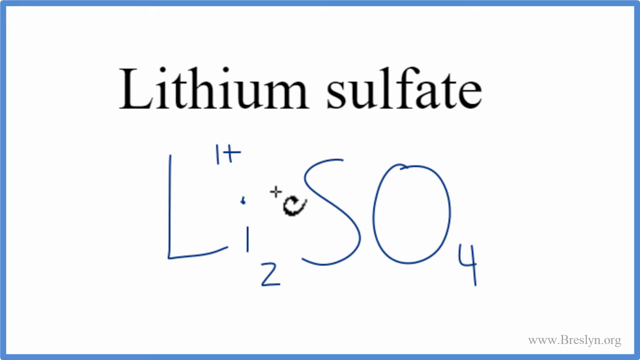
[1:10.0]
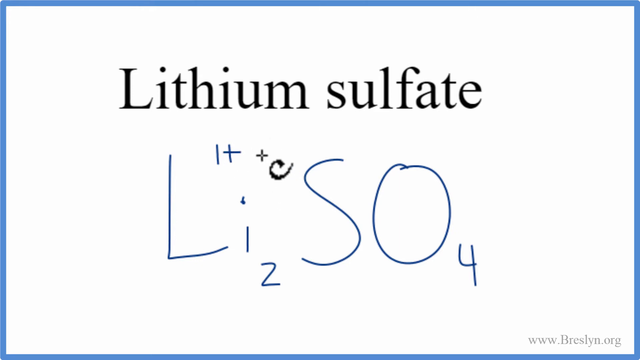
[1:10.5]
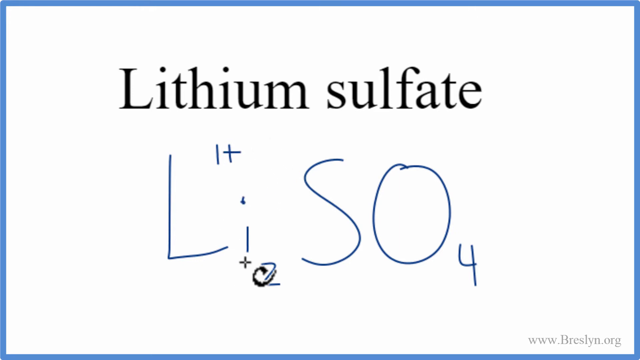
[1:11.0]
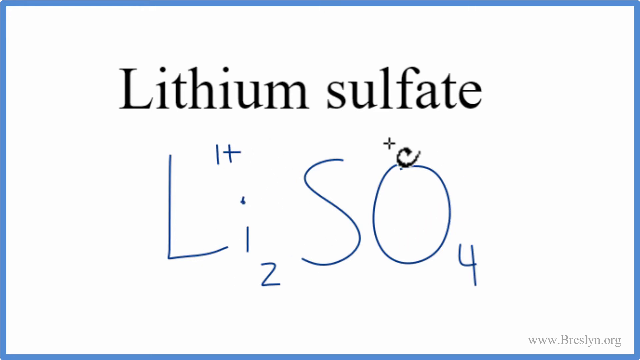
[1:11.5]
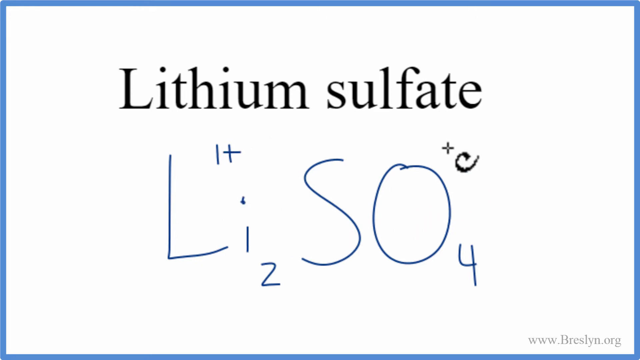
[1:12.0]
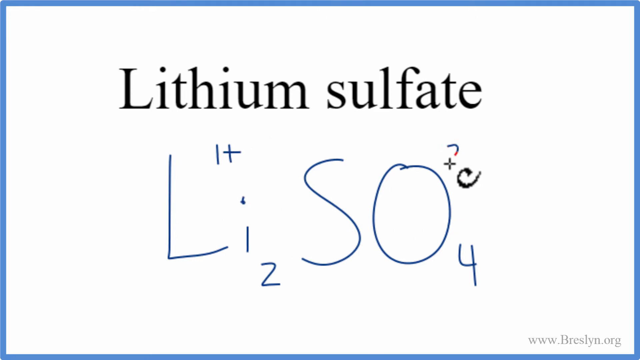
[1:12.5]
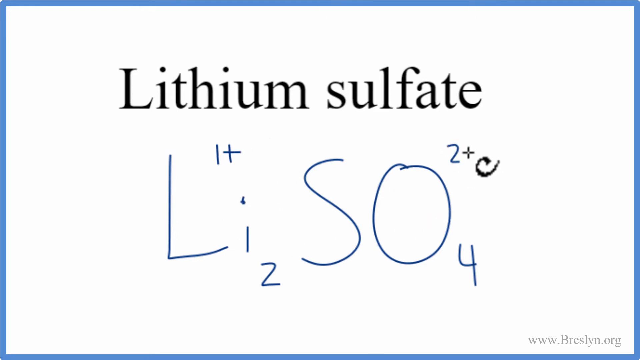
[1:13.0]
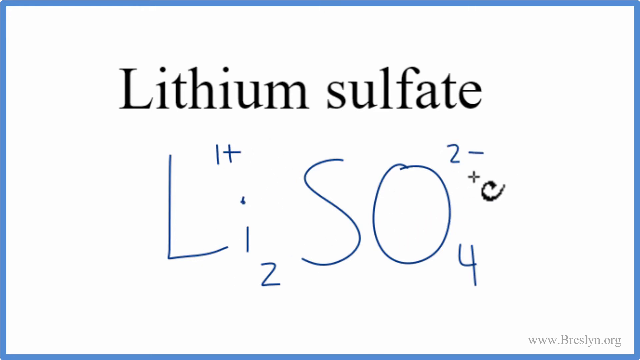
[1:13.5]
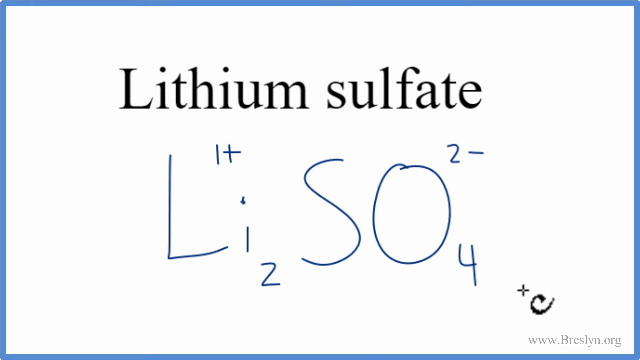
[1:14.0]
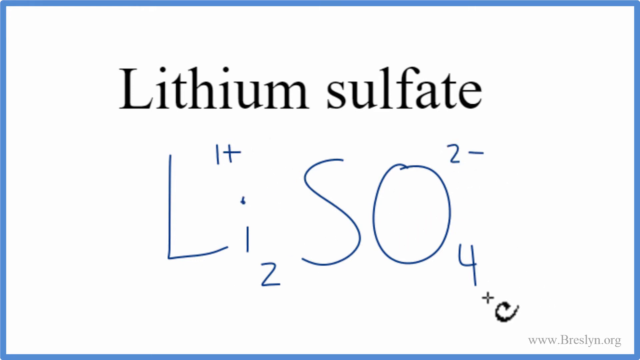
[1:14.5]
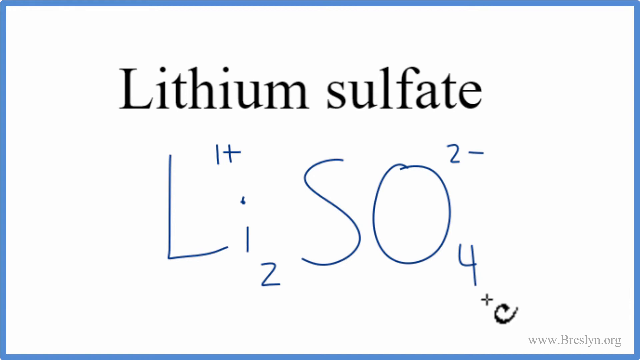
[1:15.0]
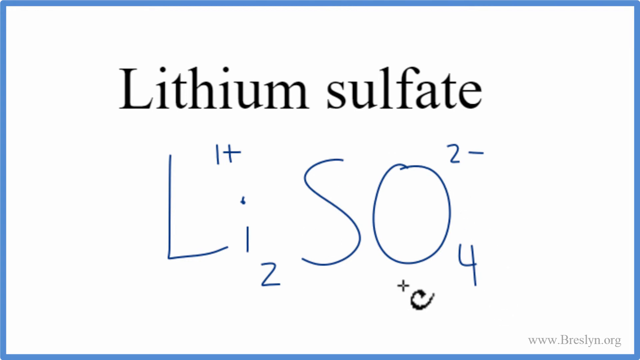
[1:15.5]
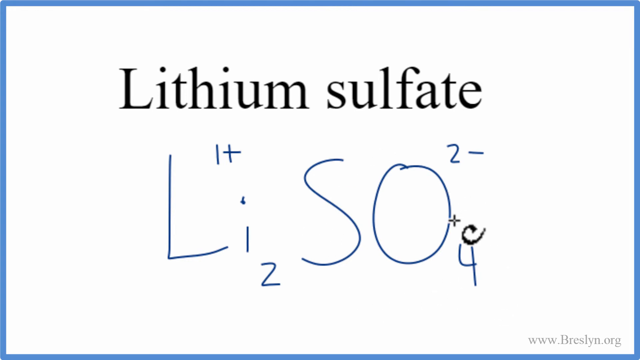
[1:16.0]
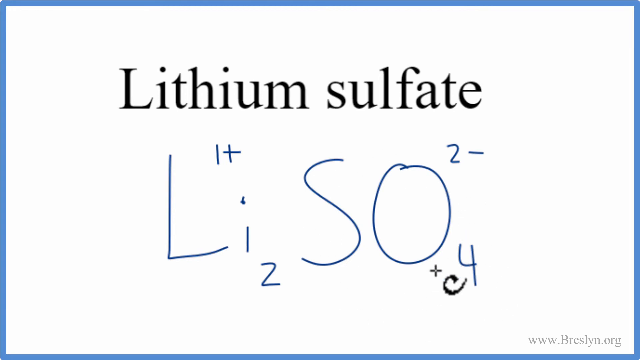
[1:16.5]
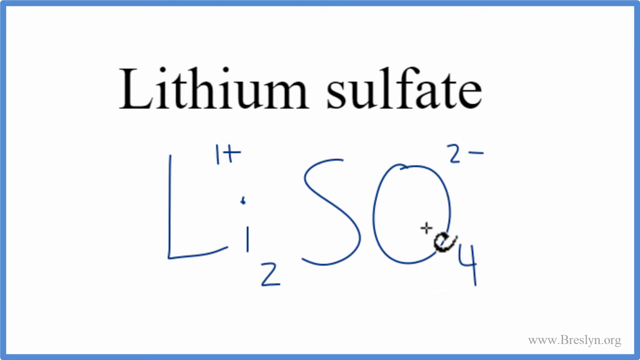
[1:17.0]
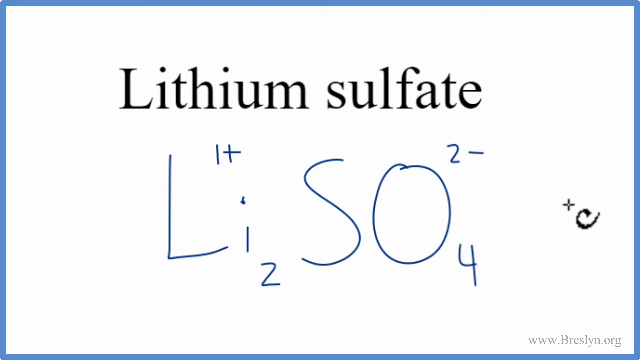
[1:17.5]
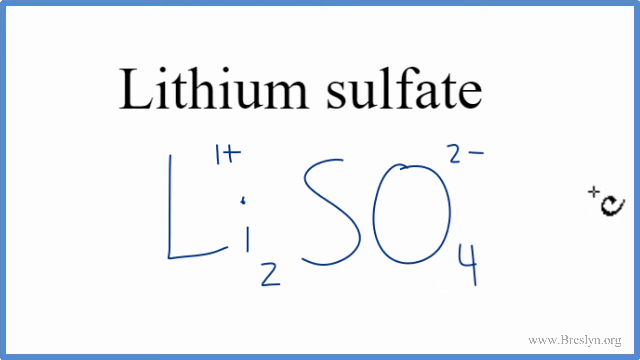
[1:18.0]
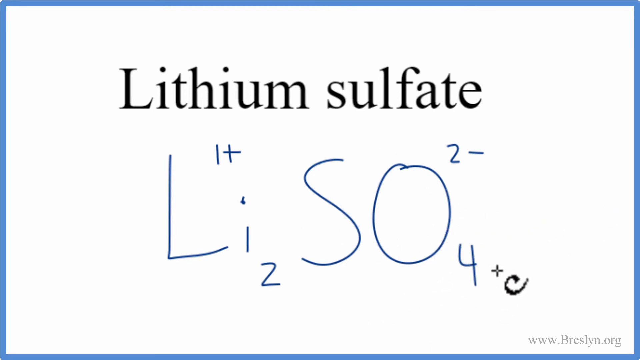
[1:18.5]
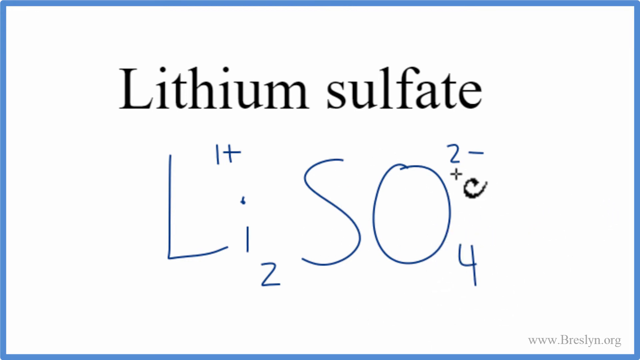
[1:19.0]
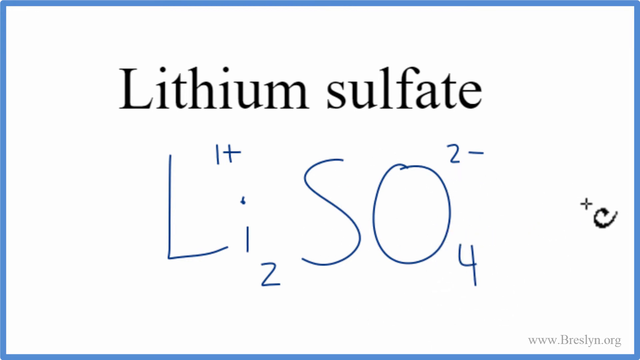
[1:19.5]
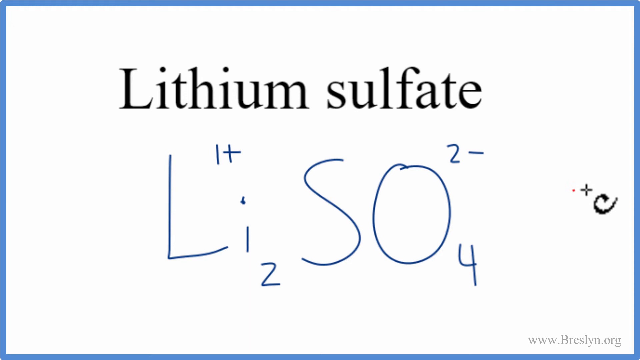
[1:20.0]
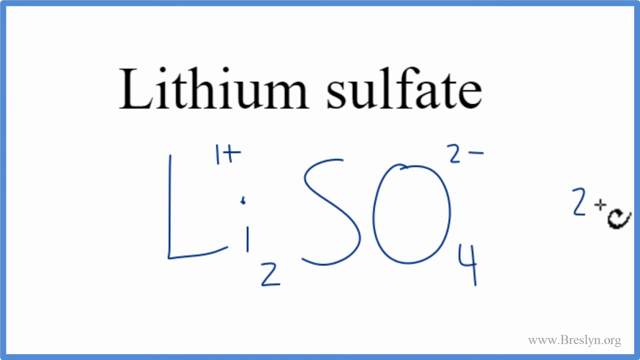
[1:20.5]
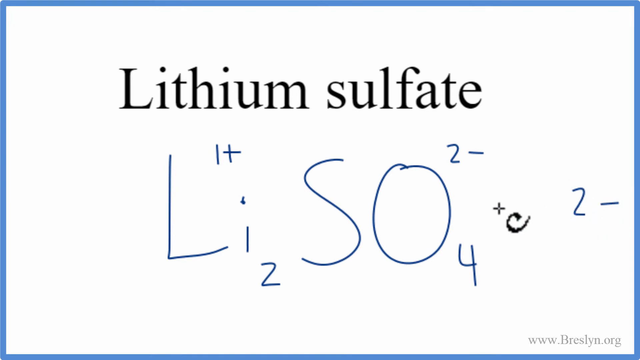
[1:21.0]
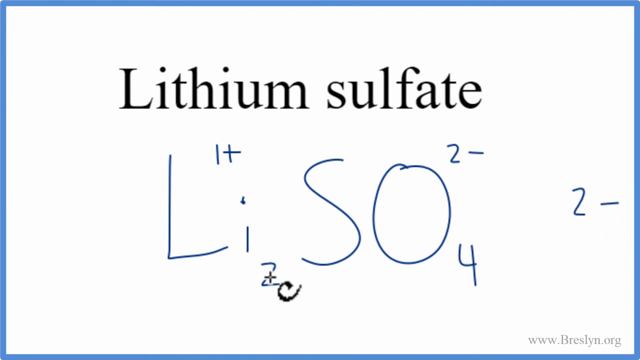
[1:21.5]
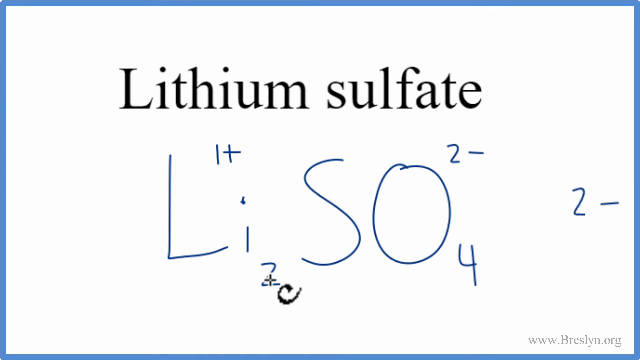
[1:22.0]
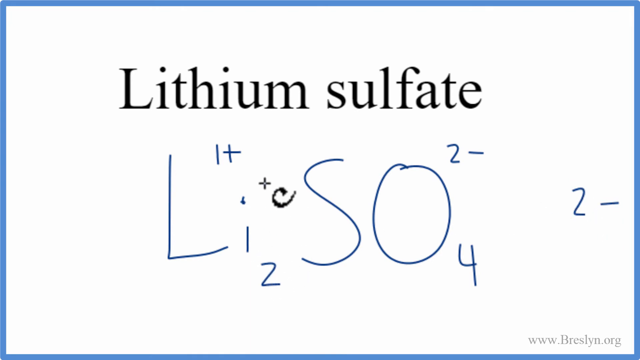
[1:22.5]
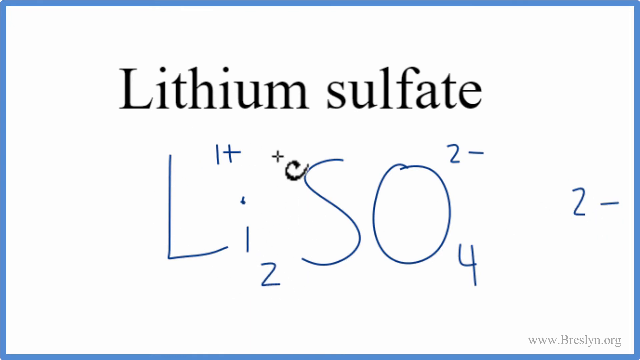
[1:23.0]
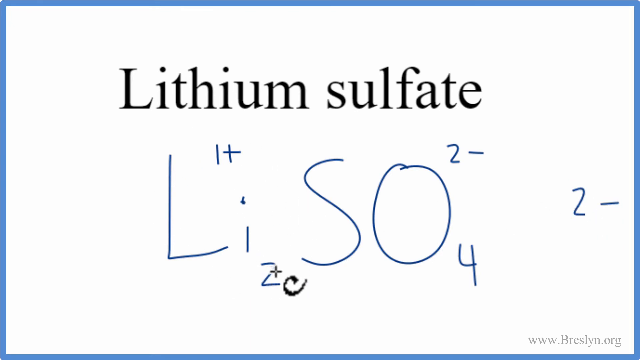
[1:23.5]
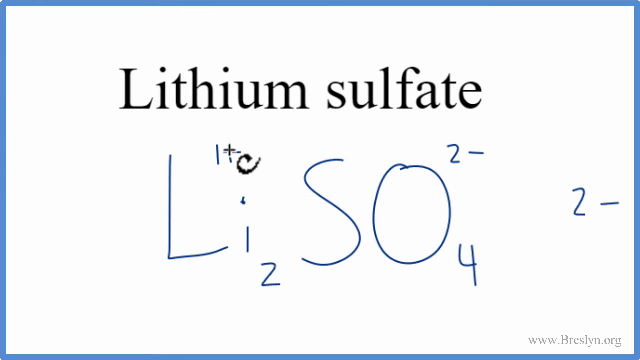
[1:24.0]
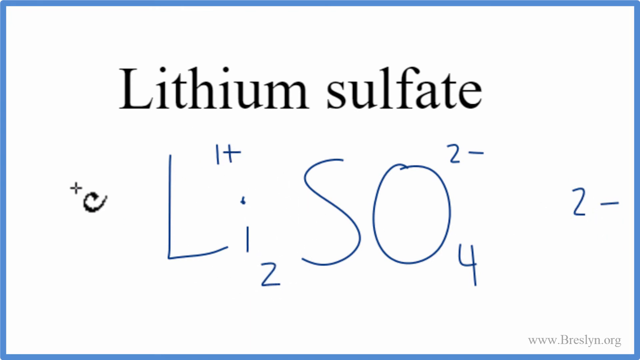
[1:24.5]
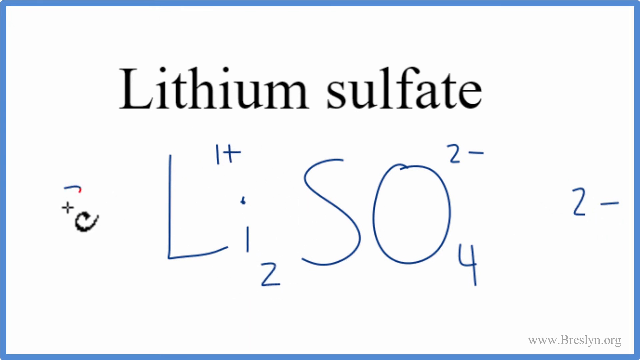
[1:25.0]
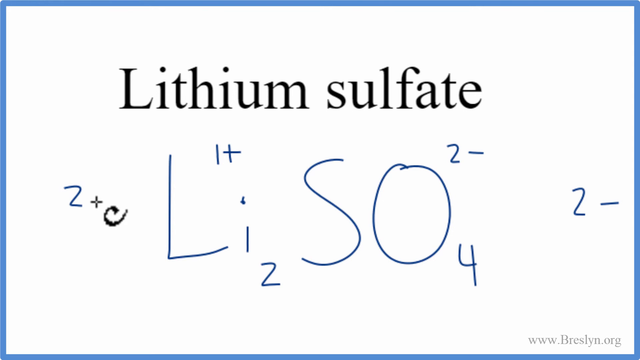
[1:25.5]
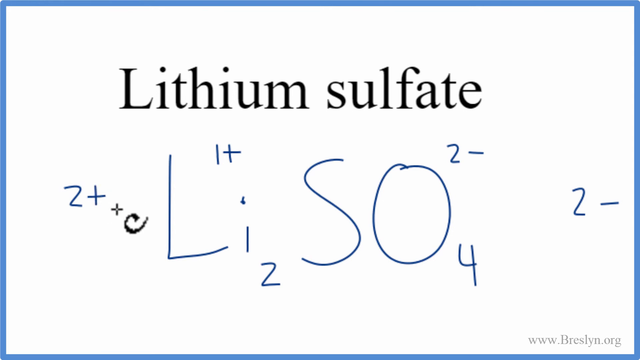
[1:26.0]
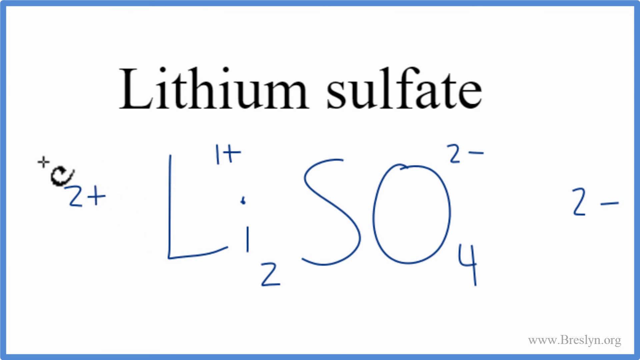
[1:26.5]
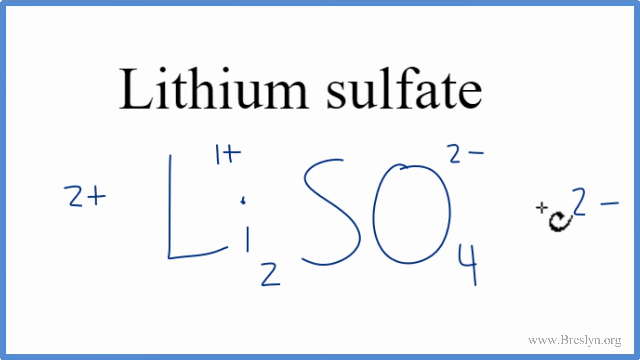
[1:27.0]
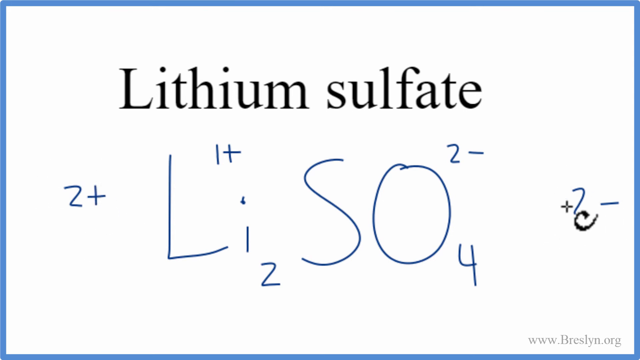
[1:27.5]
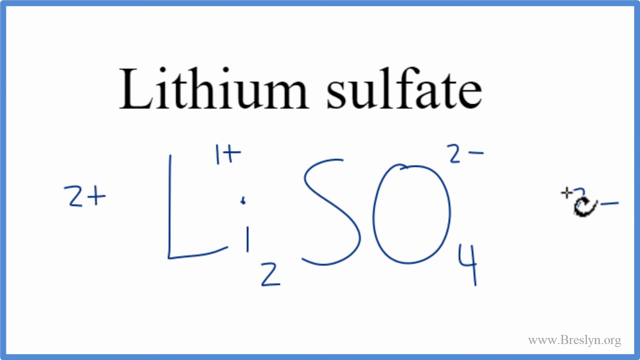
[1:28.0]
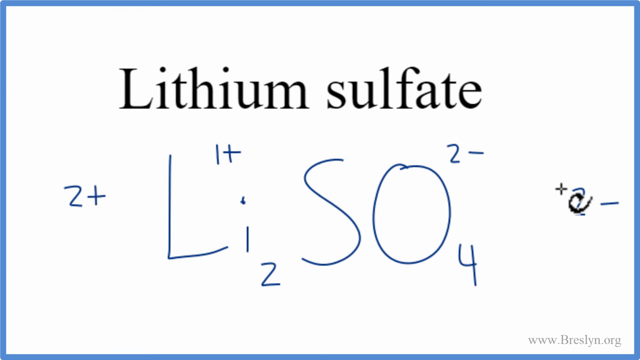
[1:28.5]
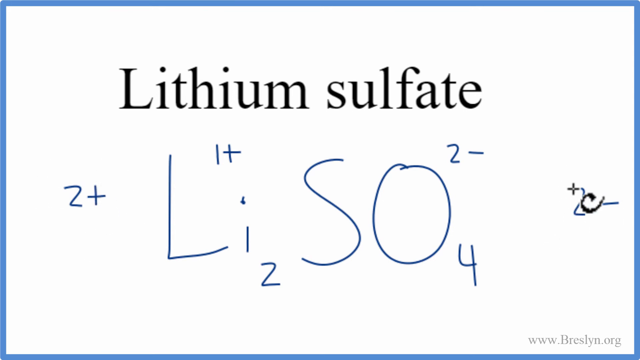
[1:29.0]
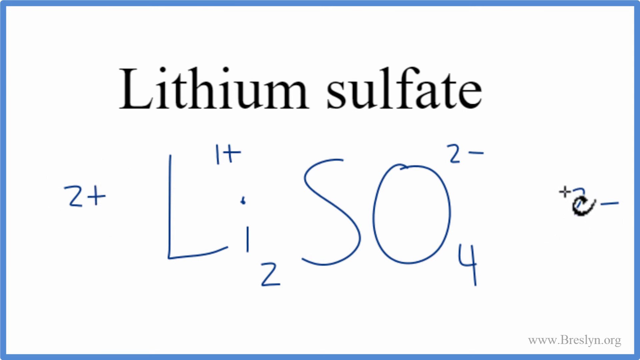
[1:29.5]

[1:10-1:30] Lithium sulfate is now written as L 1 plus I with a 2 at the bottom, and SO 2 minus with a 4 at the bottom. He writes a 2 minus at the top right of the SO, making circular motions as if explaining something, and circles the 4 at the bottom. He then writes a 2 minus at the far right. Next he circles the 1 plus on the Li2 as if explaining, and writes a 2 plus at the beginning of the formula, on the far left.